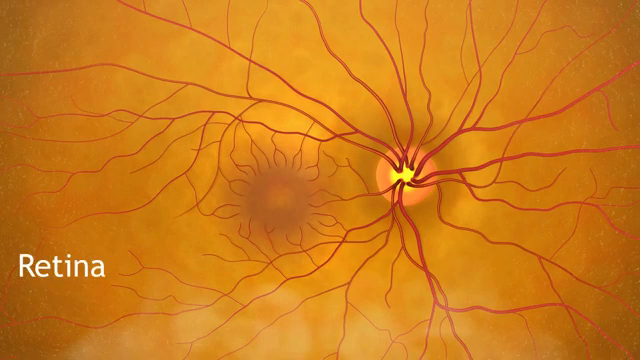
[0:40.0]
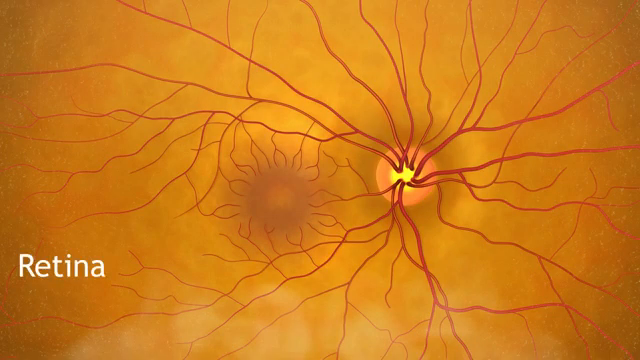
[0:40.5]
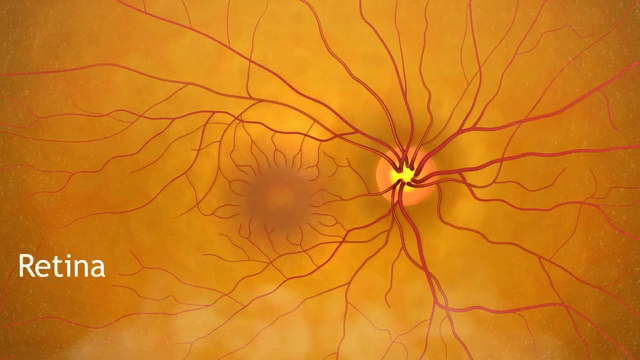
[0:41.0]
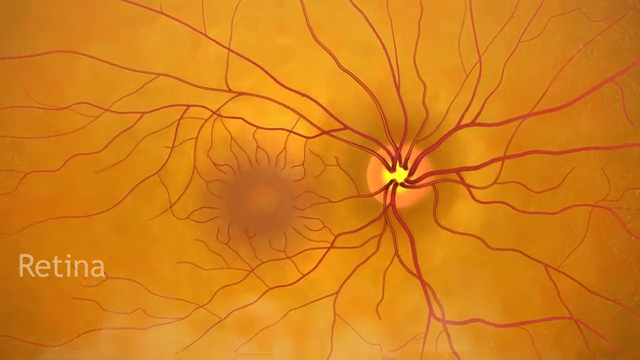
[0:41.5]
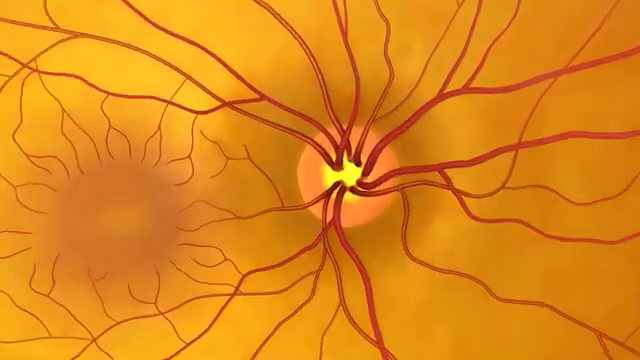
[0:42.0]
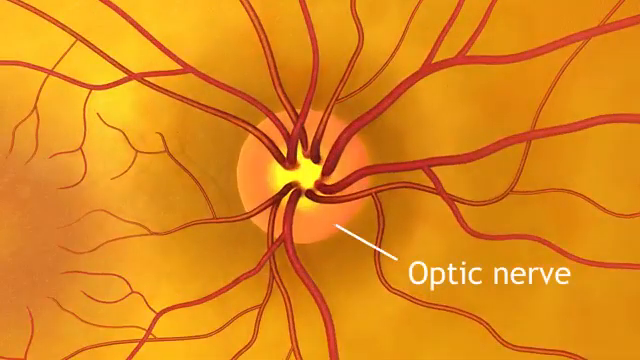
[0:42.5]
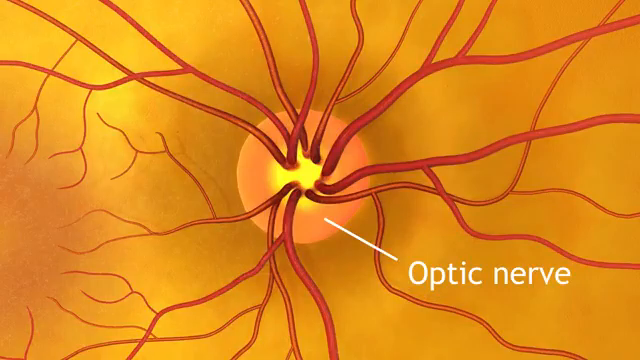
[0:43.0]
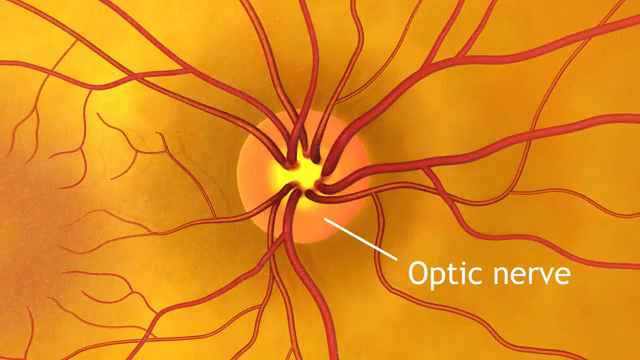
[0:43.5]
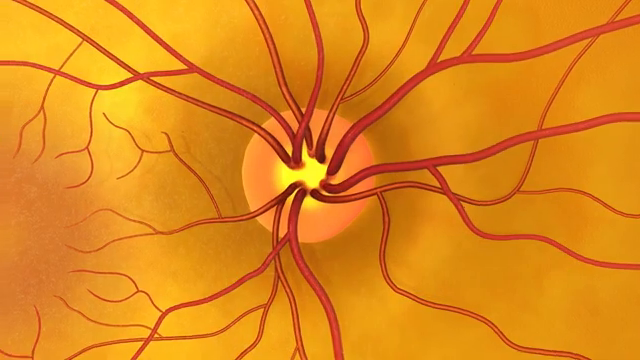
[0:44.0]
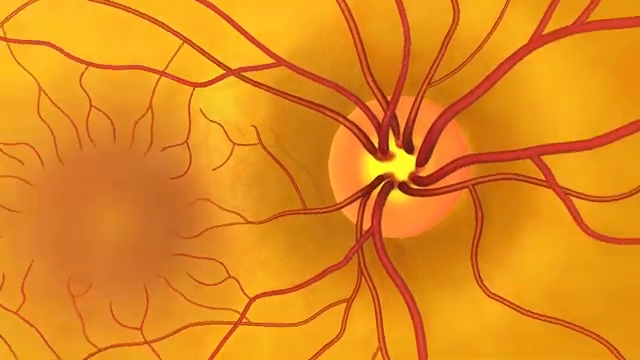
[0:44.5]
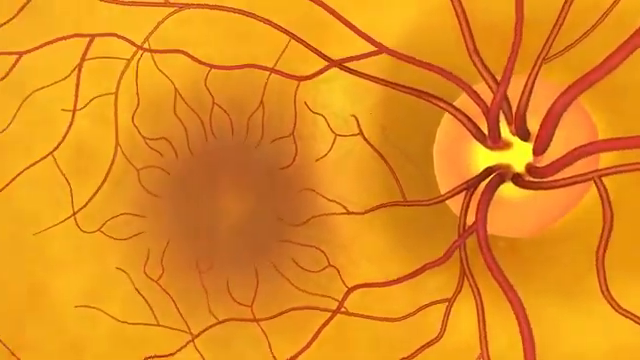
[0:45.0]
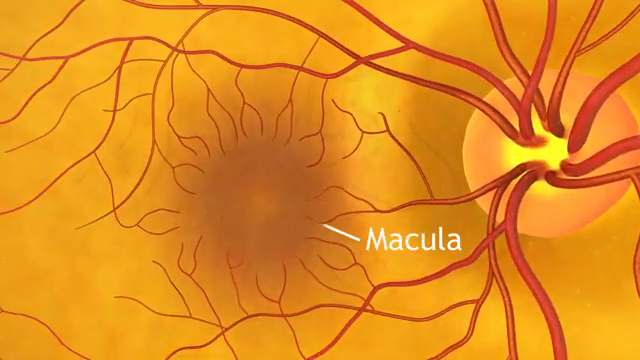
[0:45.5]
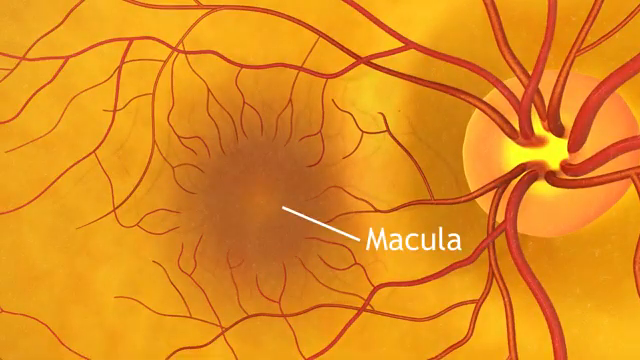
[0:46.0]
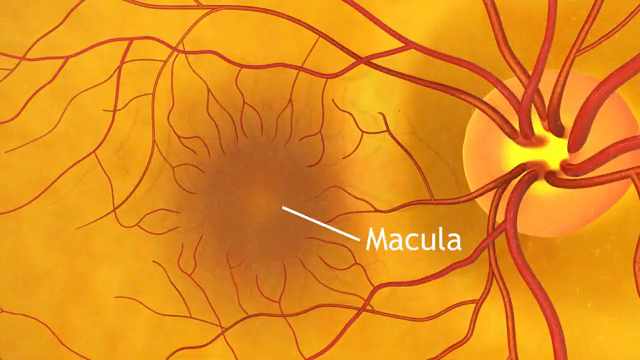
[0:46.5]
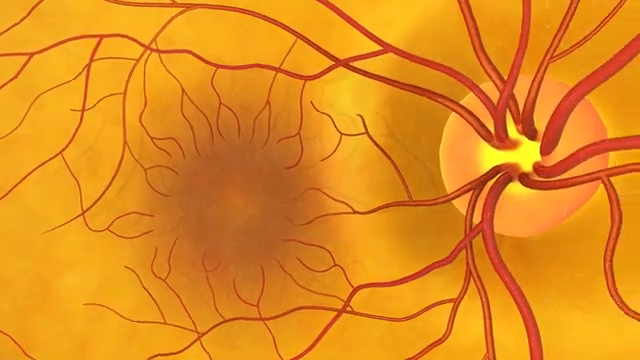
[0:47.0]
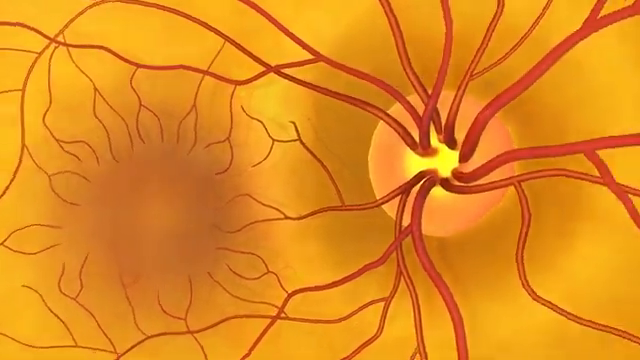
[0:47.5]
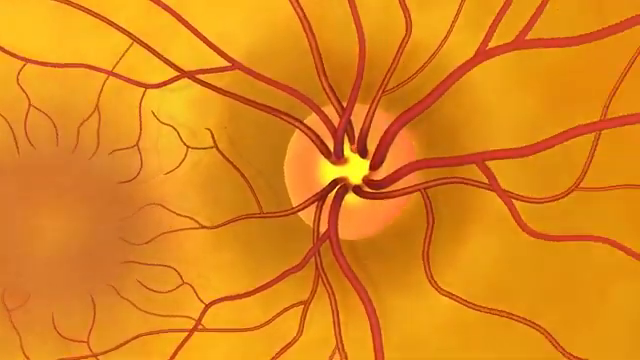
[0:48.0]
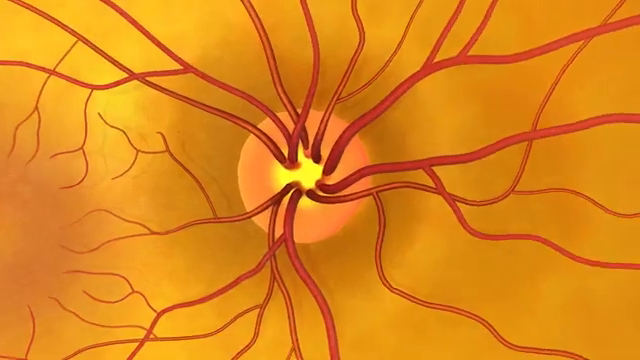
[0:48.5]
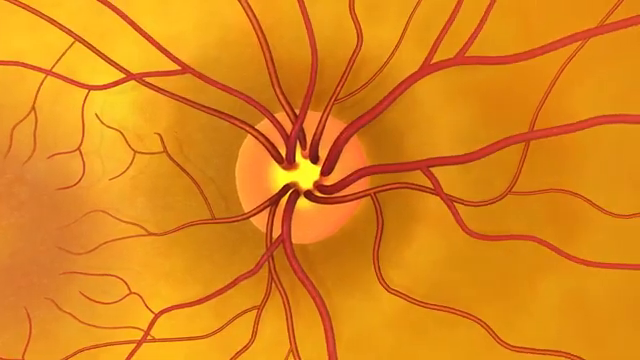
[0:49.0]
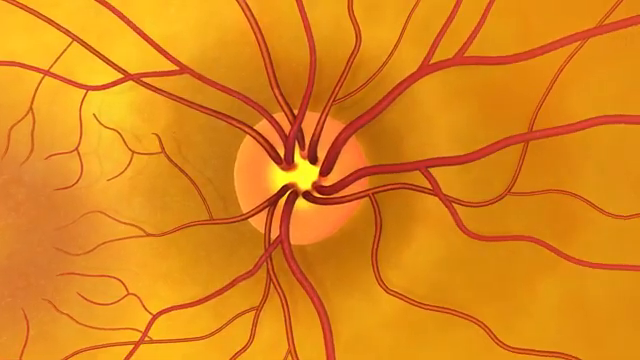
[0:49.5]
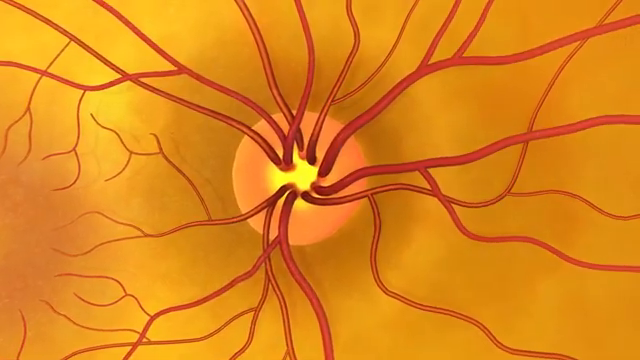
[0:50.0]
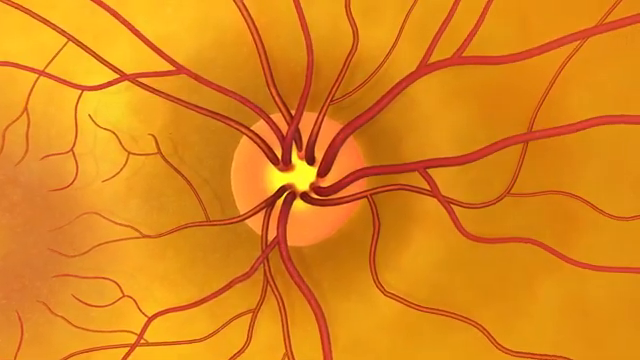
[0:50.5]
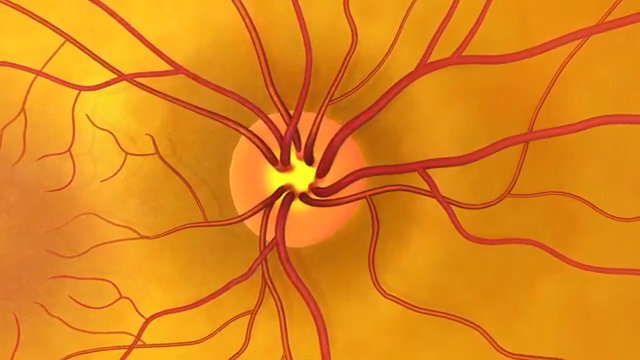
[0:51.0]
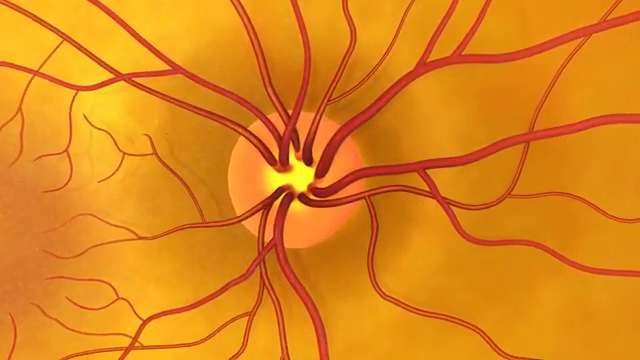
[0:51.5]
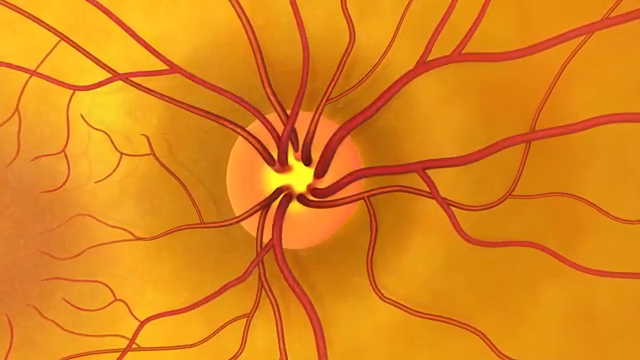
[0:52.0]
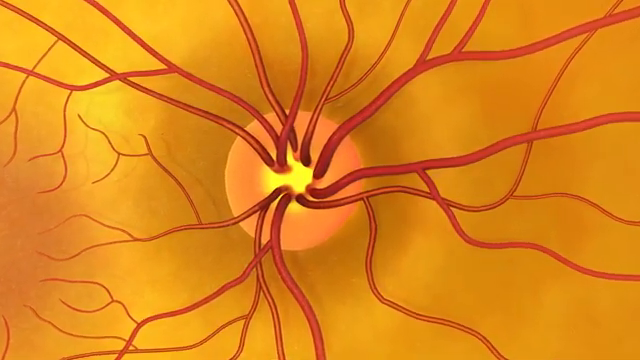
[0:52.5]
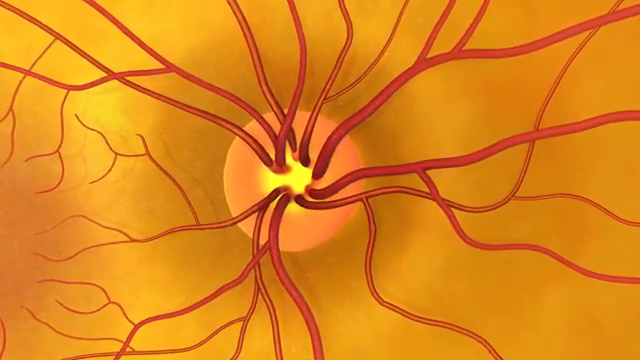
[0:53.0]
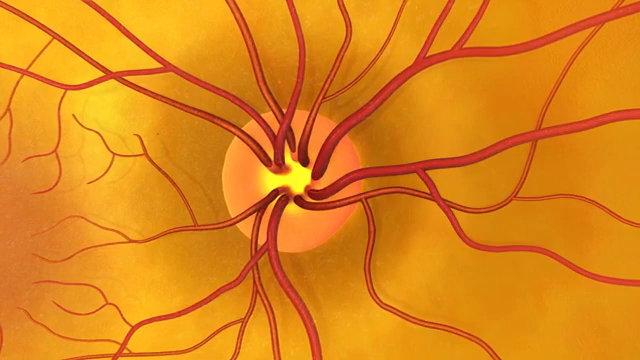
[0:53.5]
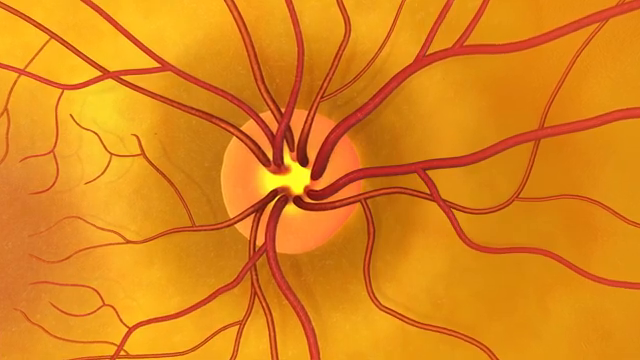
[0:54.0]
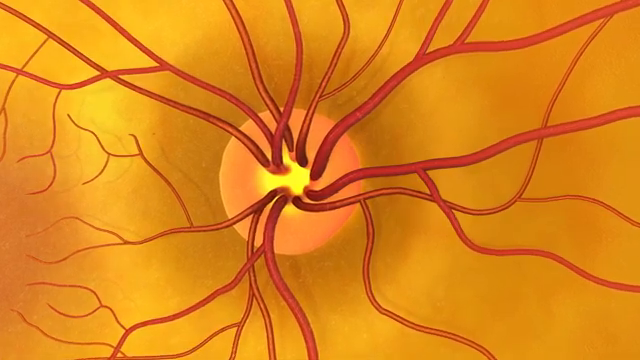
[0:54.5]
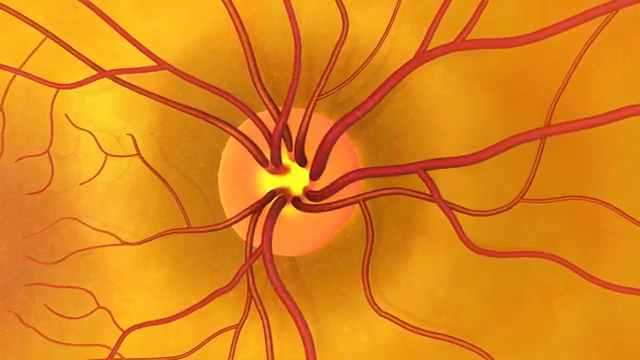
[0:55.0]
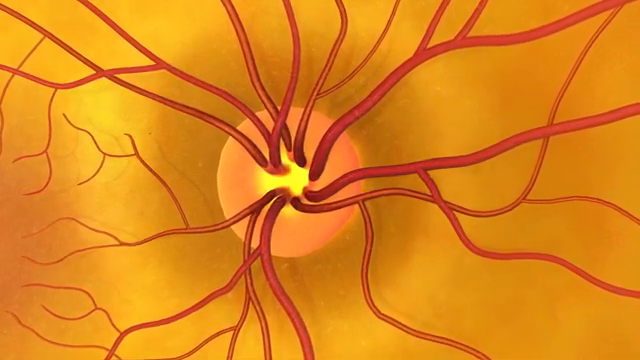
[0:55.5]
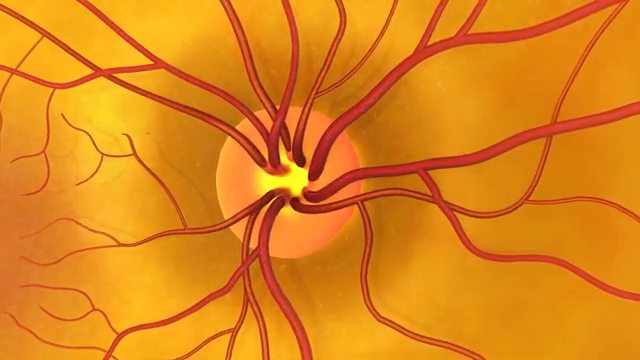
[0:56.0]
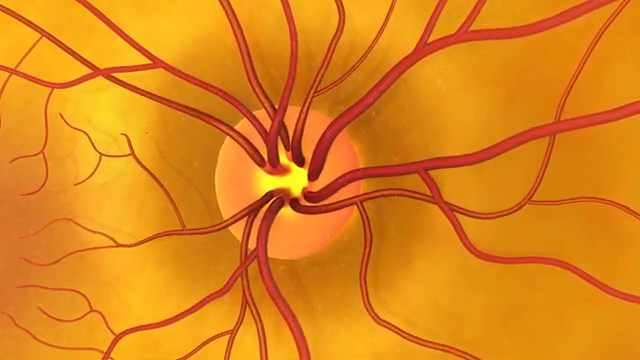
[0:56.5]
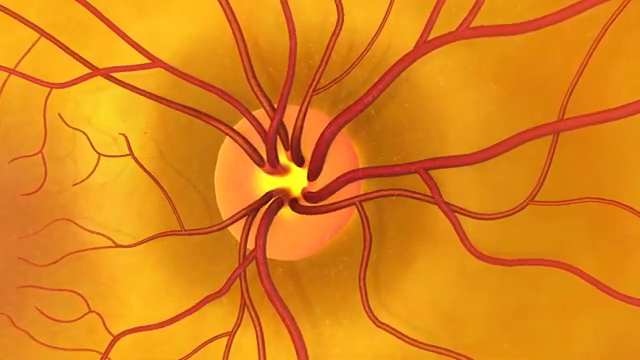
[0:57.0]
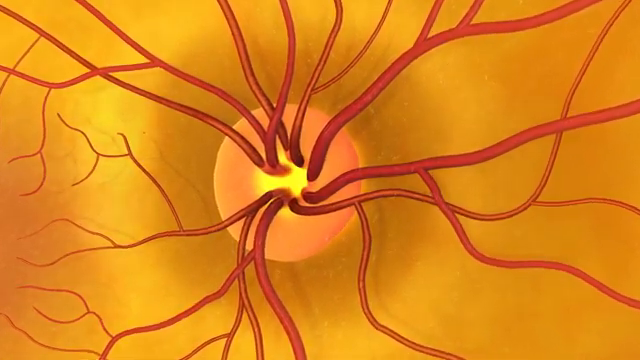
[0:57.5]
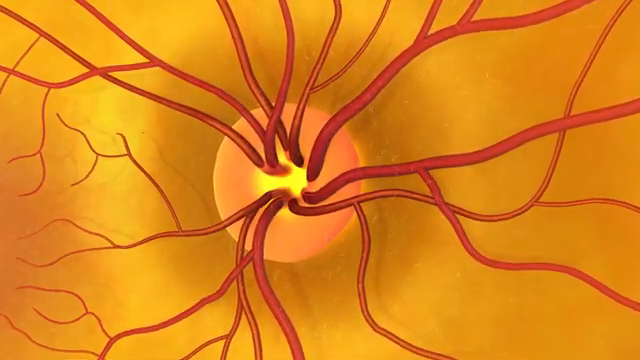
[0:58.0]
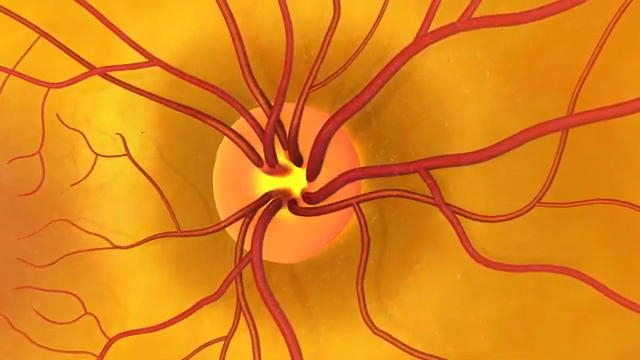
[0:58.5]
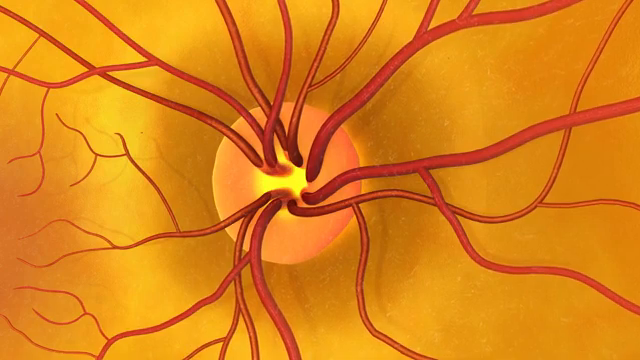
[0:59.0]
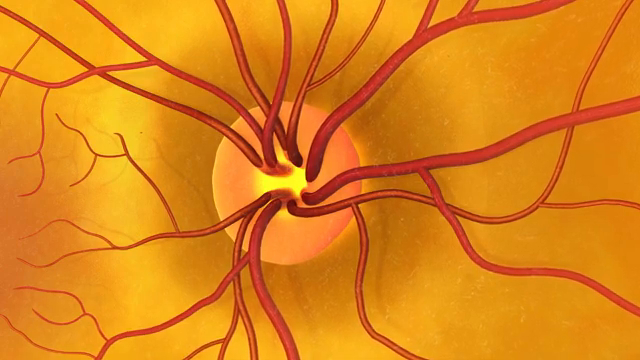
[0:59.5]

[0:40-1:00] A 3D visualization shows the macula in another area. Three different areas are labeled with white text titles, with arrows pointing from the titles to the areas, including the retina as part of the diagram. The blood vessels are shown in a great deal of accumulated detail. The camera tilts from one direction to another.